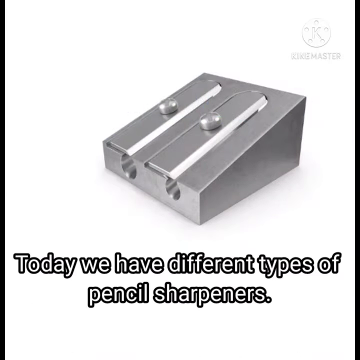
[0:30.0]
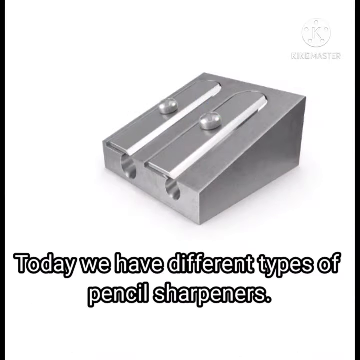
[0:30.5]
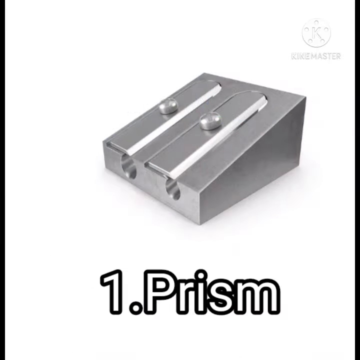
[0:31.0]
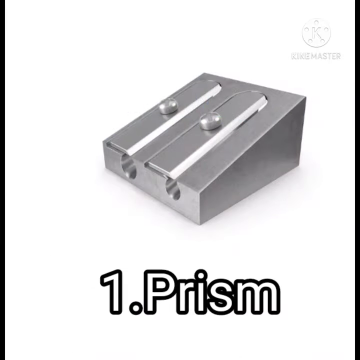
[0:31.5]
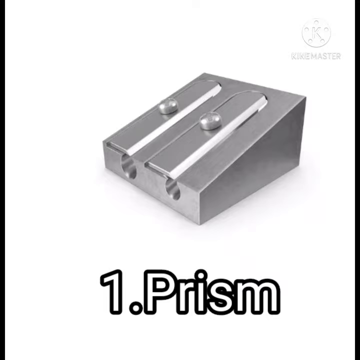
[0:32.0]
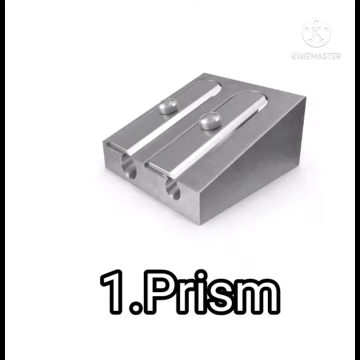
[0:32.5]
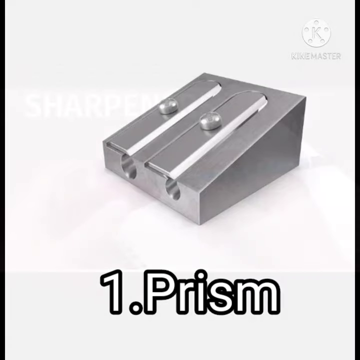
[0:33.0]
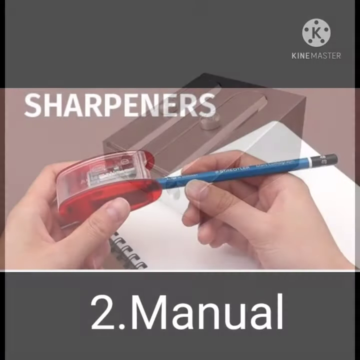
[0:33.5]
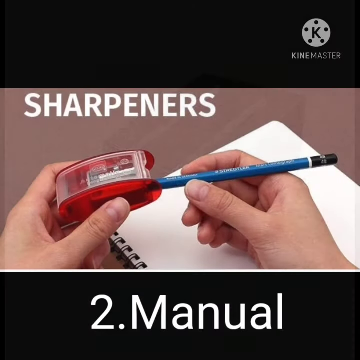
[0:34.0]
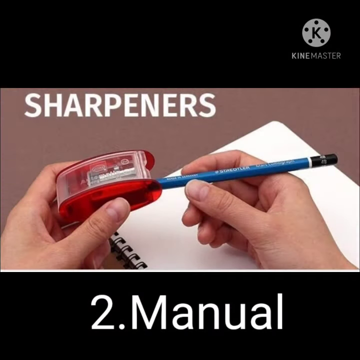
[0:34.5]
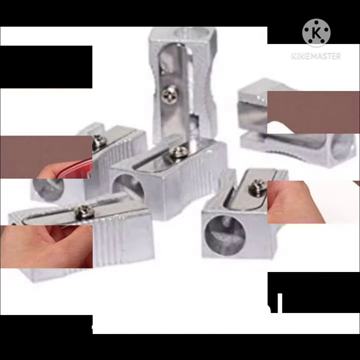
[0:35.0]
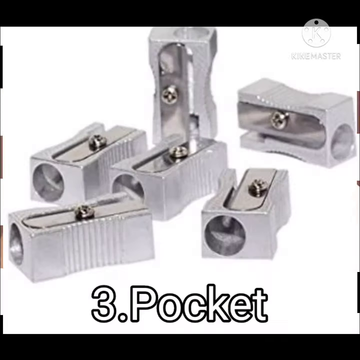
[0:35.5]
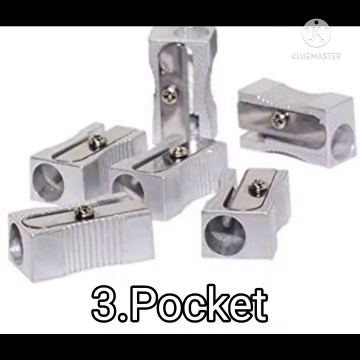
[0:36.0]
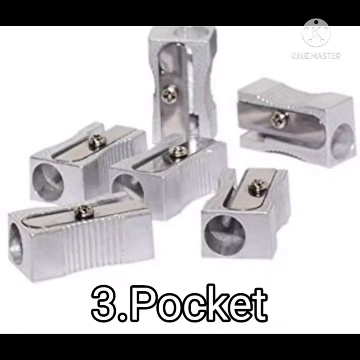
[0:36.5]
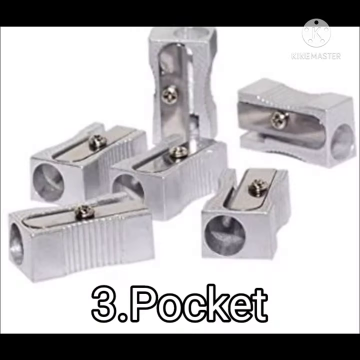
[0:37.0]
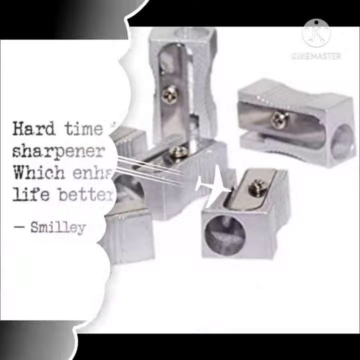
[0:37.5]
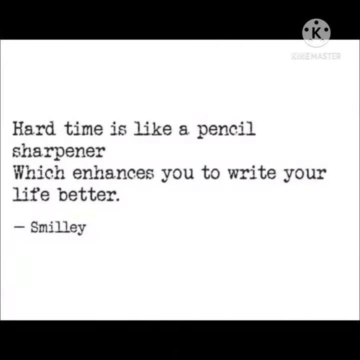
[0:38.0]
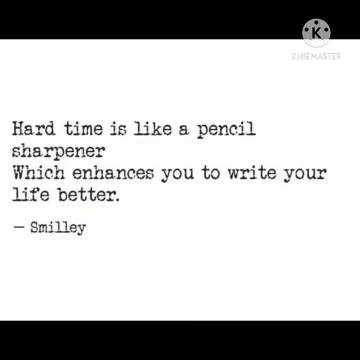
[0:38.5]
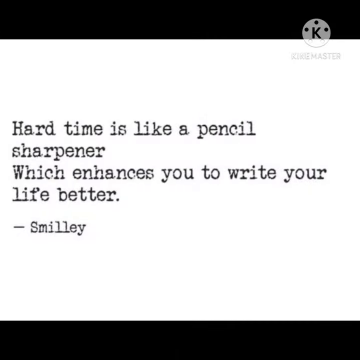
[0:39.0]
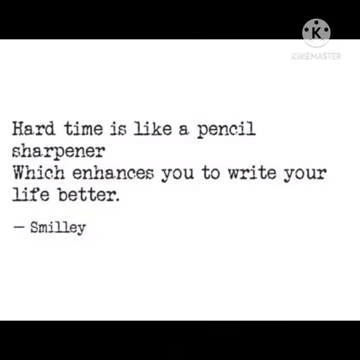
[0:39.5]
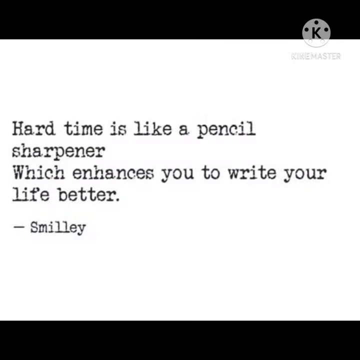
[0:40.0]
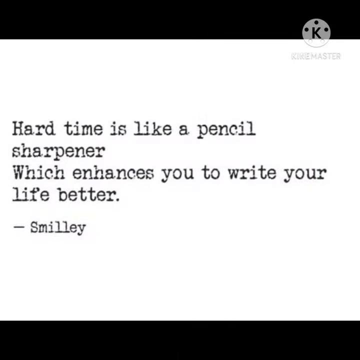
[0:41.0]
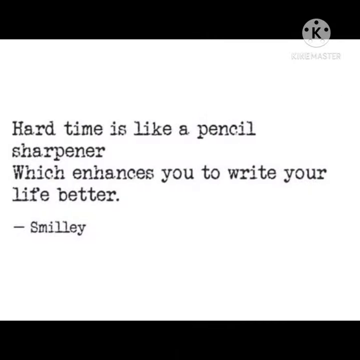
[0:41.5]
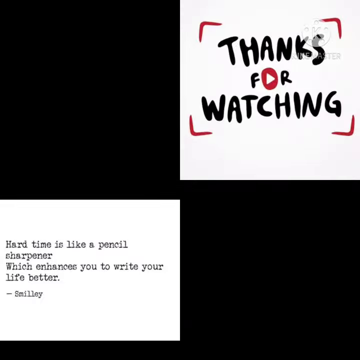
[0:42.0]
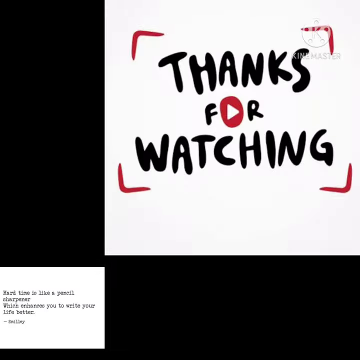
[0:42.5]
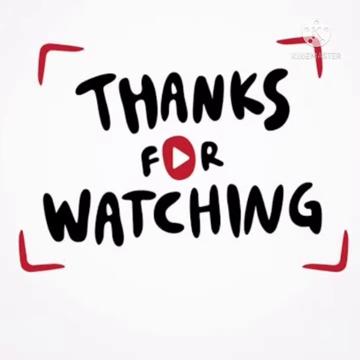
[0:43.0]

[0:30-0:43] Various images of various pencil sharpeners appear as the video progresses, in quick flashes. Text in a white font at the bottom uses the numbers 1, 2 and 3 to give the names of the different types of sharpeners. The photos of the sharpeners are very large and definitely not to scale. A logo in the upper right corner, from the maker of the video, is a circle with the letter K.